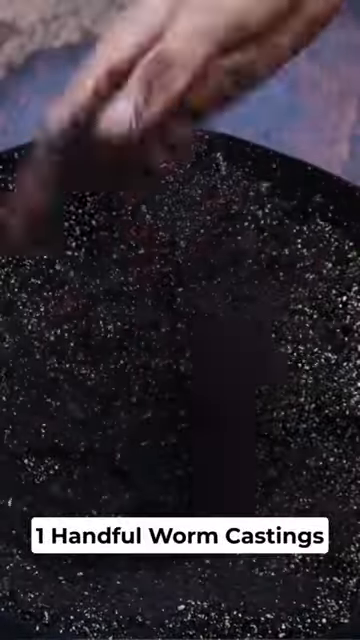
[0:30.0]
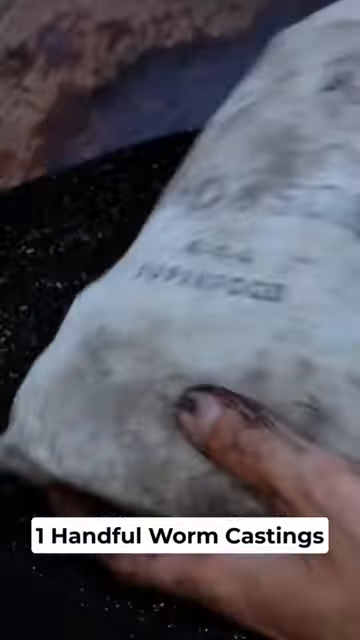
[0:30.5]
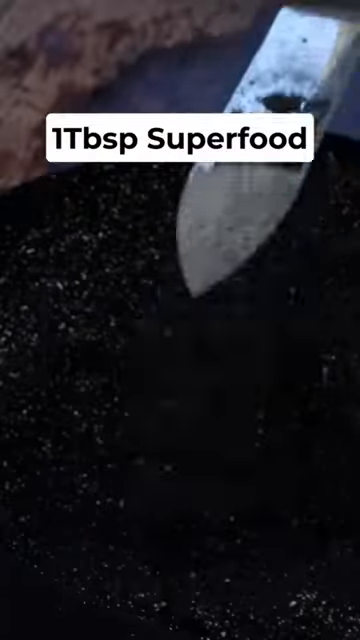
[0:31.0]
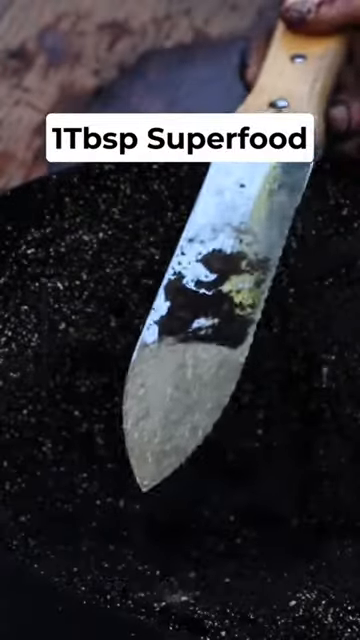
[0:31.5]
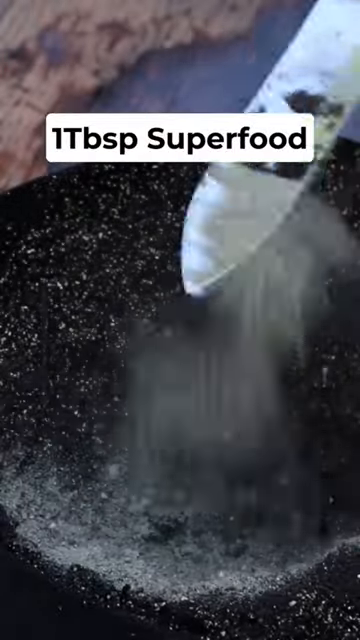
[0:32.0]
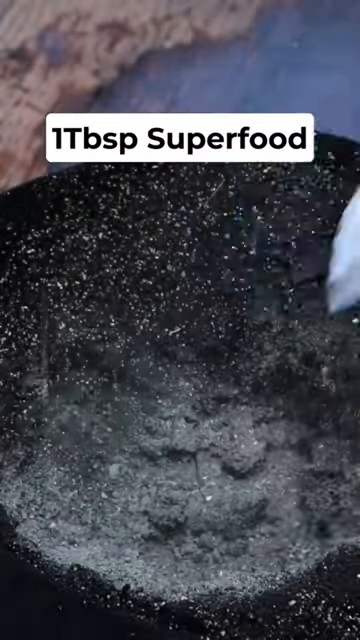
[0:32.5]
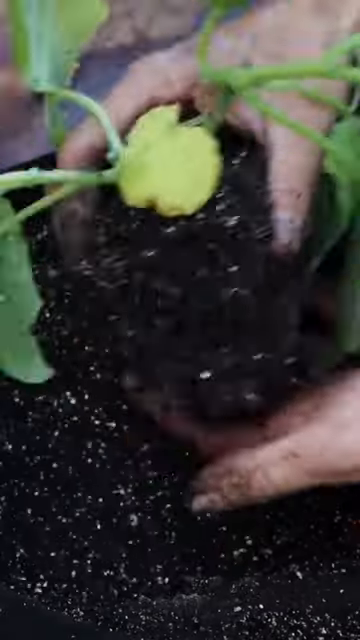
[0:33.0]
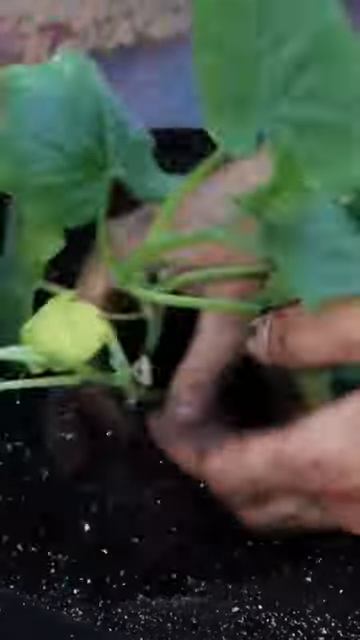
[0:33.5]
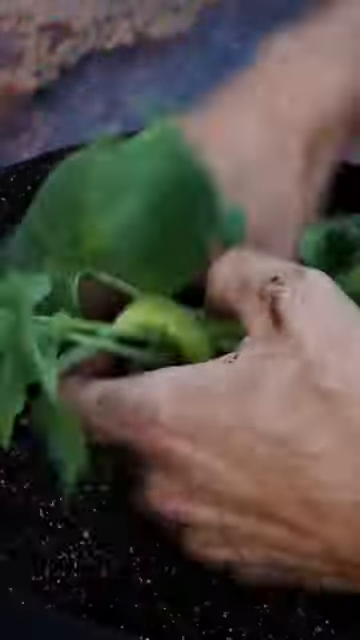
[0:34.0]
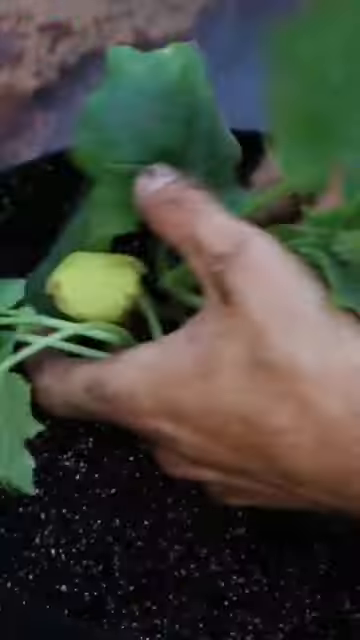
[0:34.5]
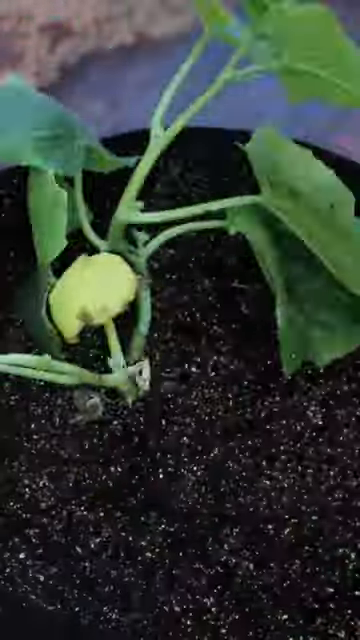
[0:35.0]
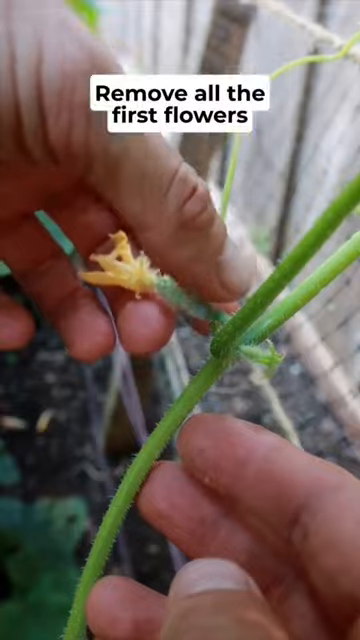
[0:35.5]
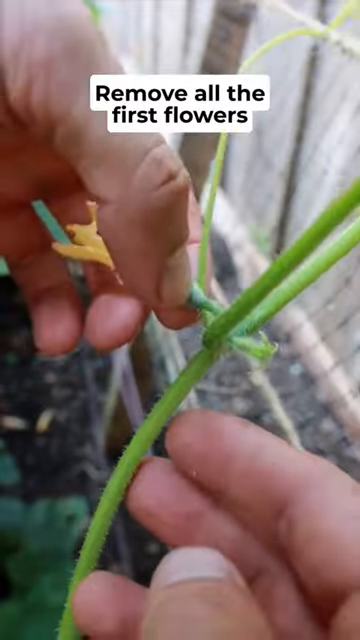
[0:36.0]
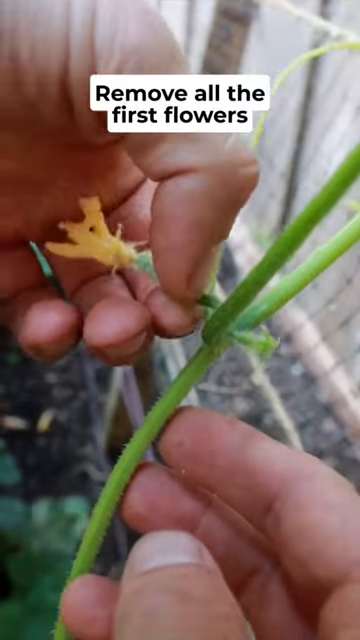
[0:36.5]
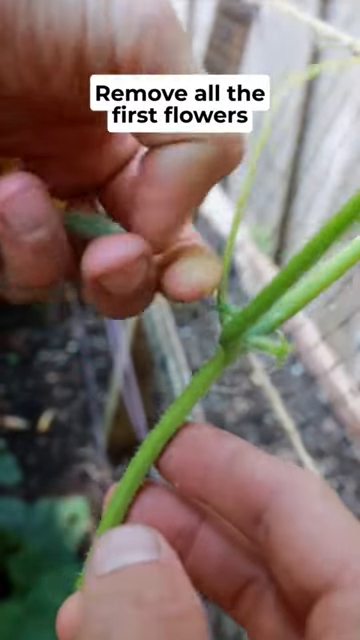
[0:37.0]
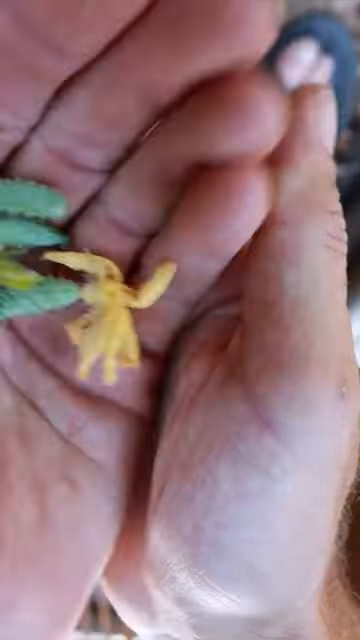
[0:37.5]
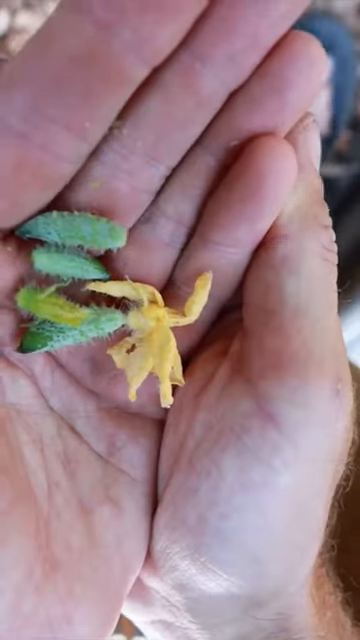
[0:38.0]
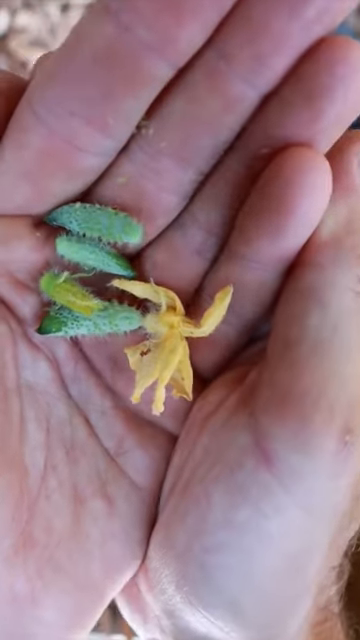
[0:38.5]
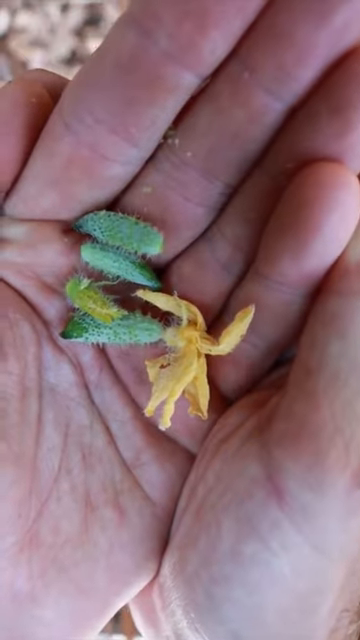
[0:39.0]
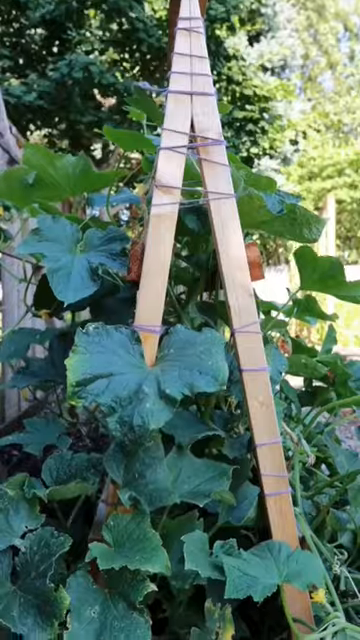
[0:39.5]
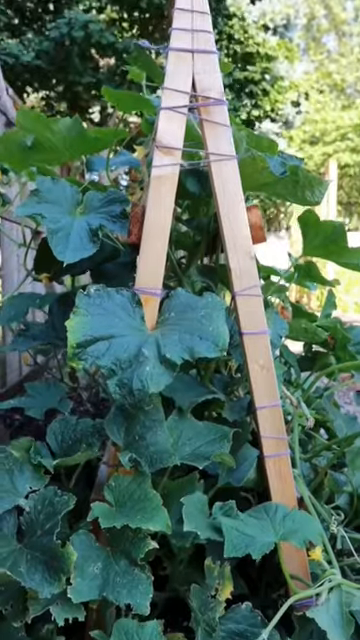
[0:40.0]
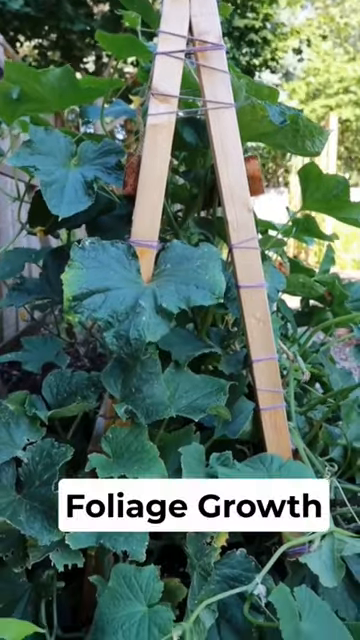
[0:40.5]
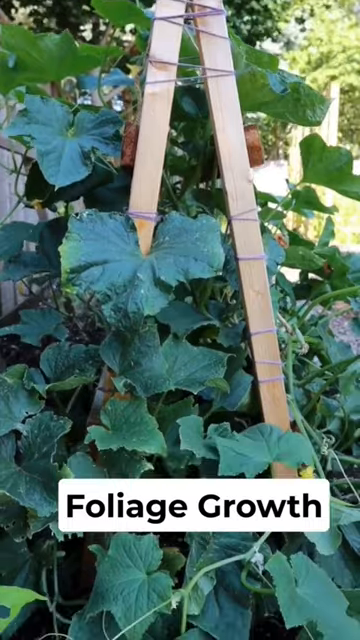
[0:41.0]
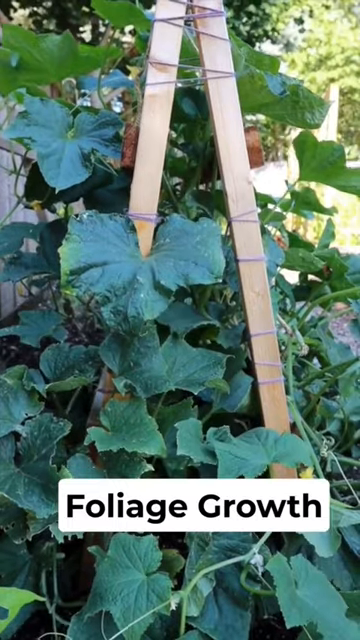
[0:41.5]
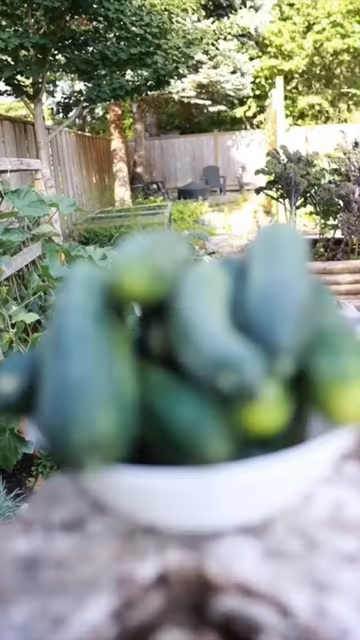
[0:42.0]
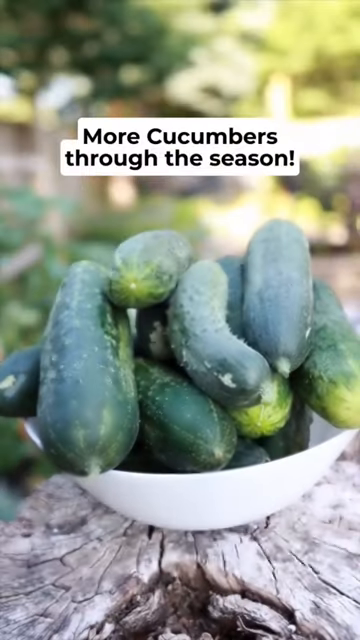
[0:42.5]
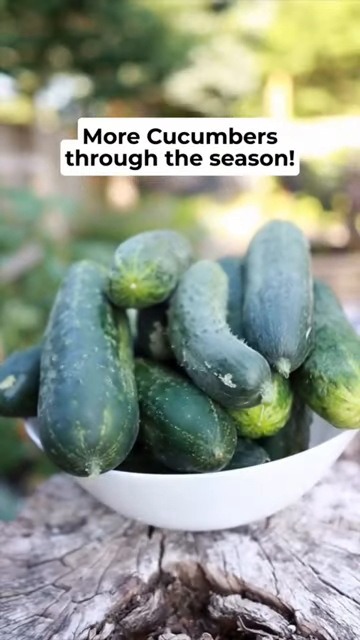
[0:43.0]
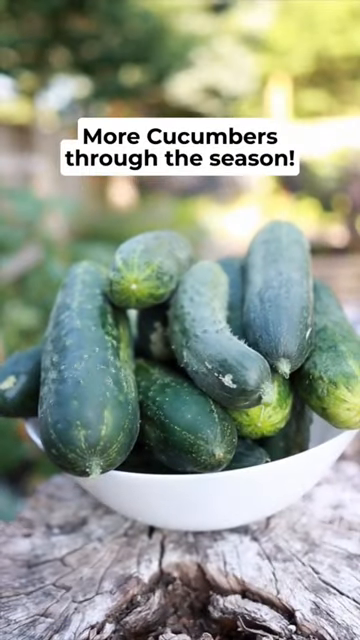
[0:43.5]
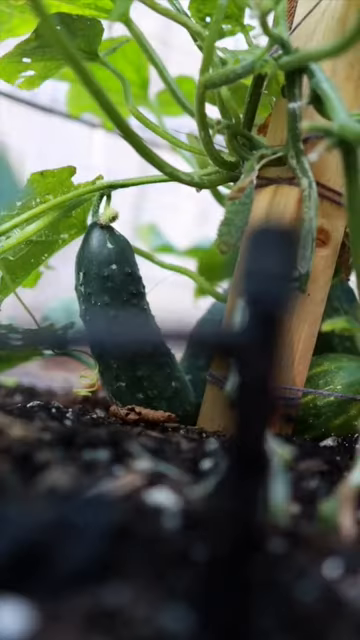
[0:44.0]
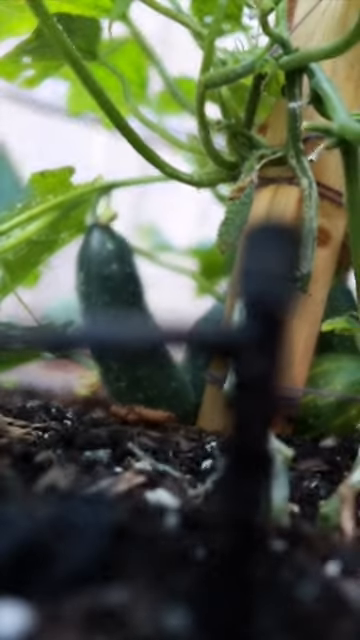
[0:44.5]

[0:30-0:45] A powdered plant food is sprinkled over the soil. The plants are repotted from the three-inch pots into the soil underneath the A-frames, and the vines are trained to grow up the A-frame. The first flowers are removed.